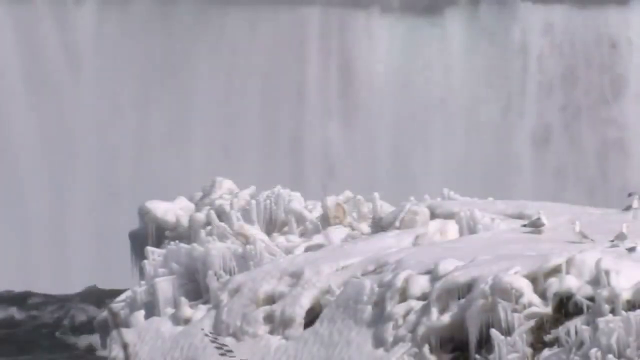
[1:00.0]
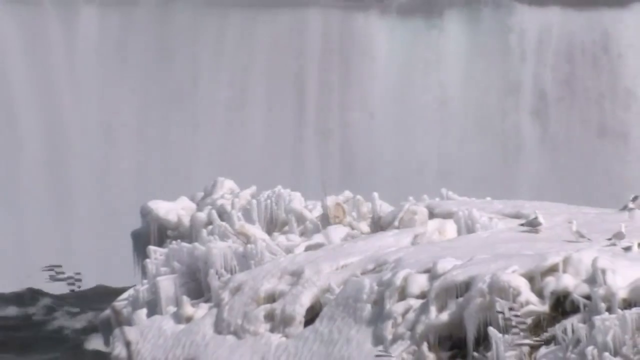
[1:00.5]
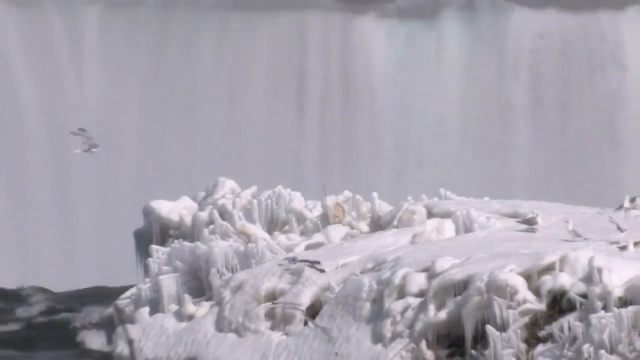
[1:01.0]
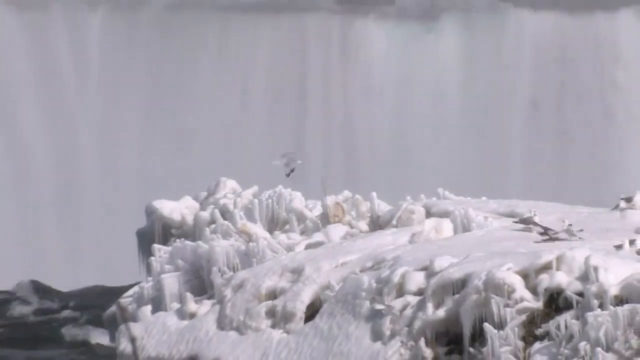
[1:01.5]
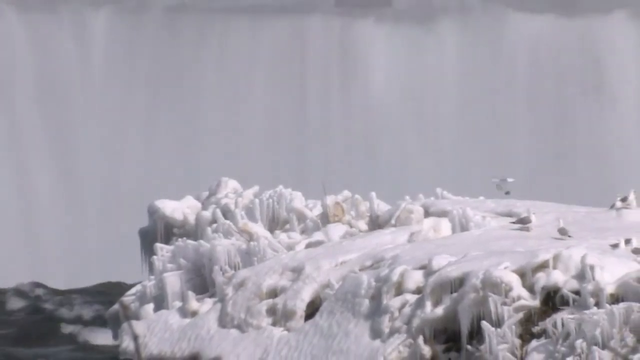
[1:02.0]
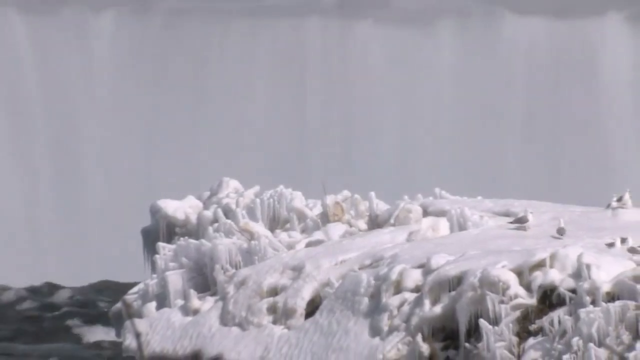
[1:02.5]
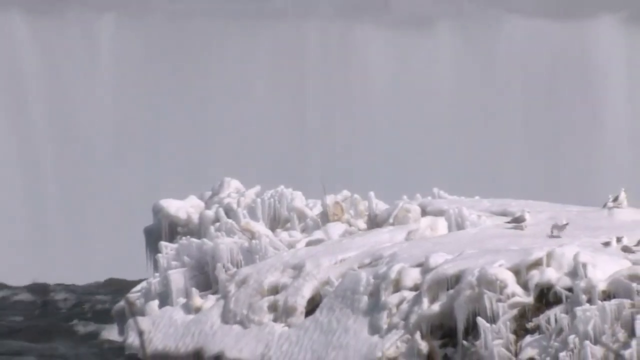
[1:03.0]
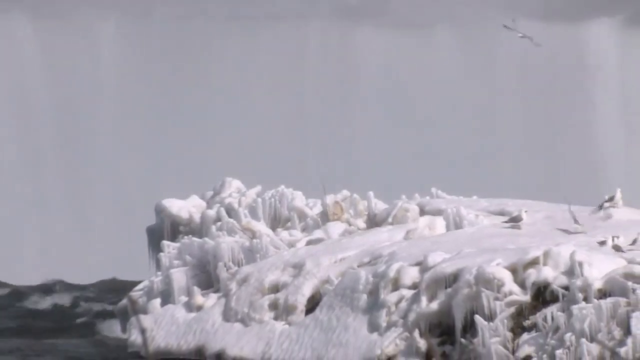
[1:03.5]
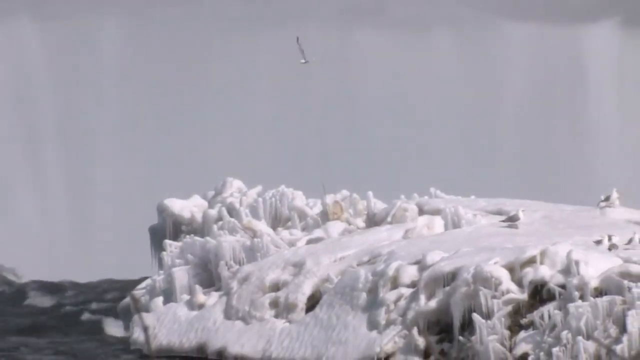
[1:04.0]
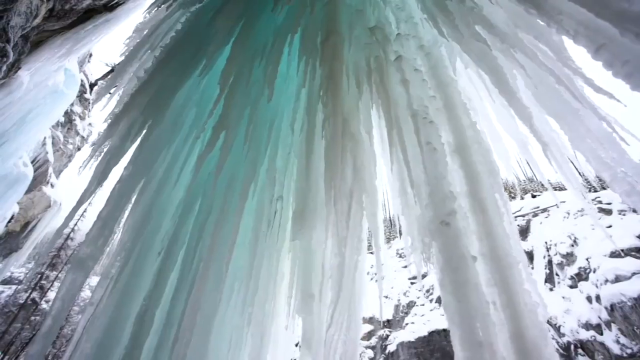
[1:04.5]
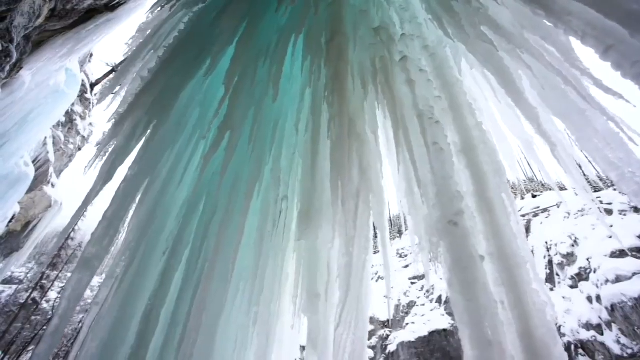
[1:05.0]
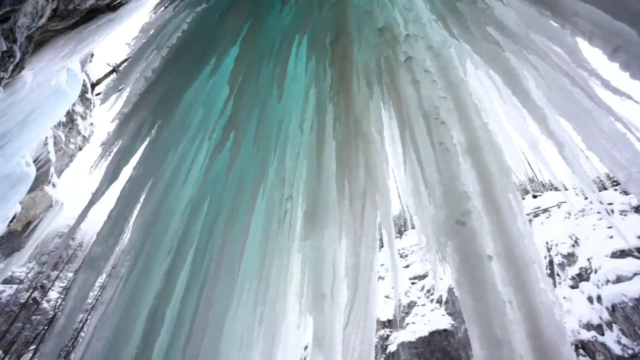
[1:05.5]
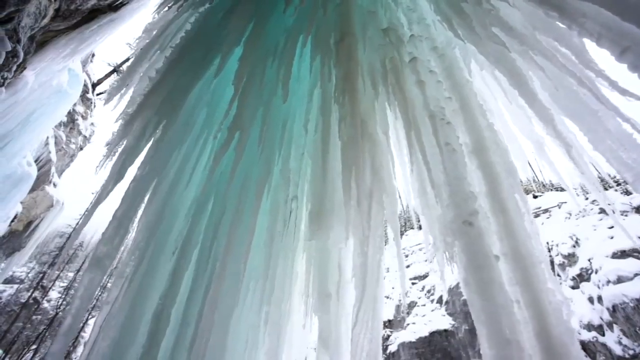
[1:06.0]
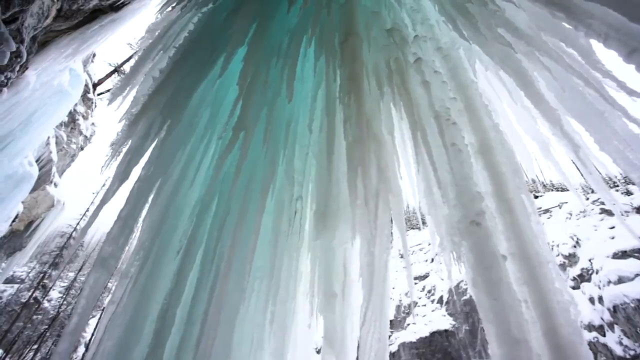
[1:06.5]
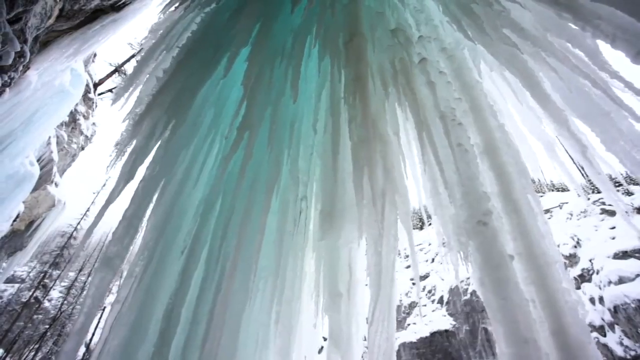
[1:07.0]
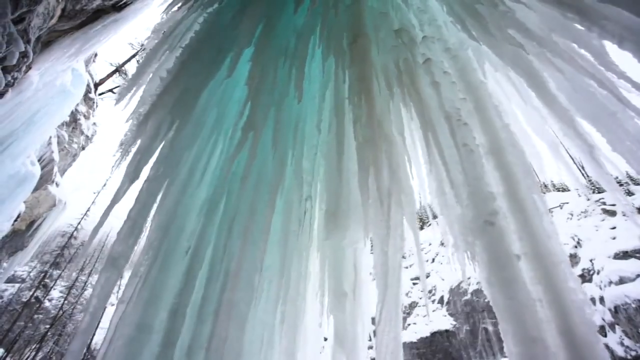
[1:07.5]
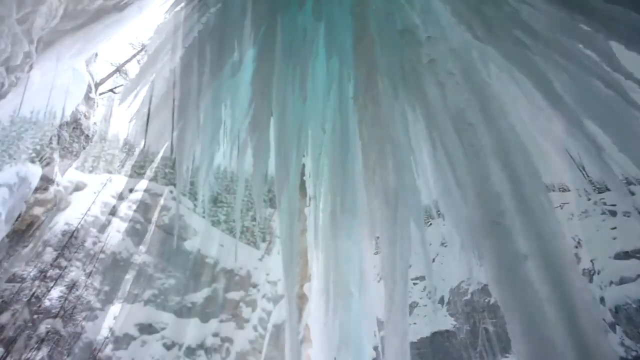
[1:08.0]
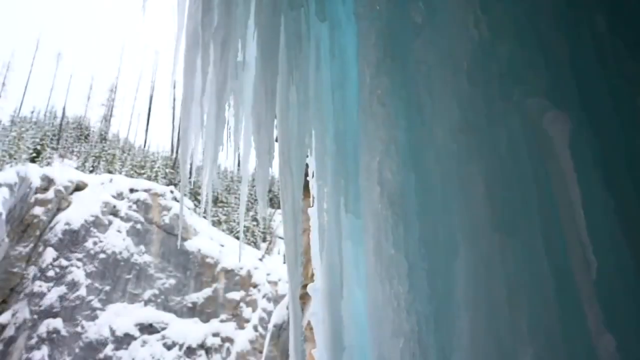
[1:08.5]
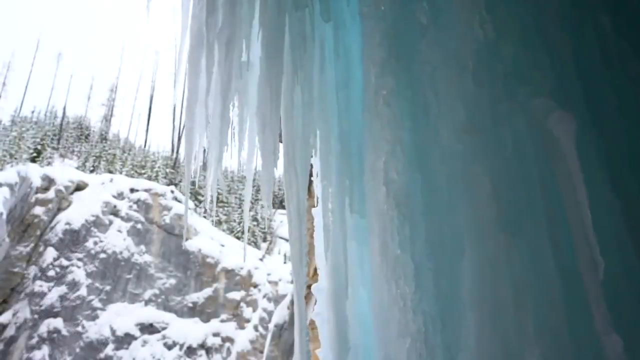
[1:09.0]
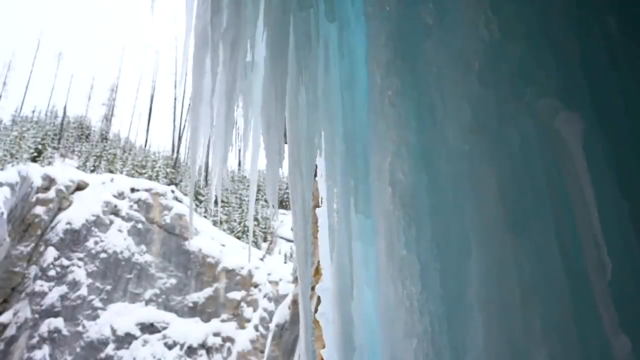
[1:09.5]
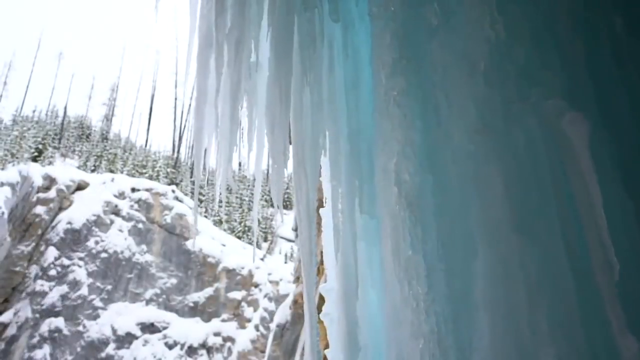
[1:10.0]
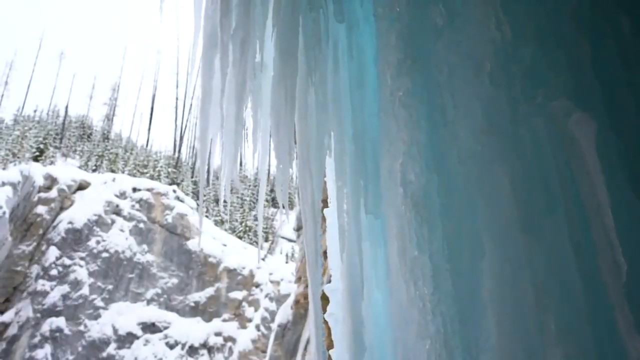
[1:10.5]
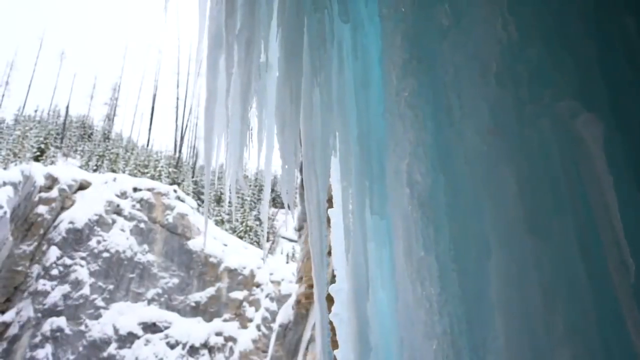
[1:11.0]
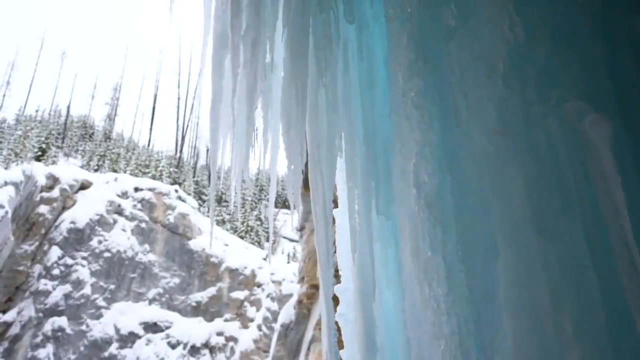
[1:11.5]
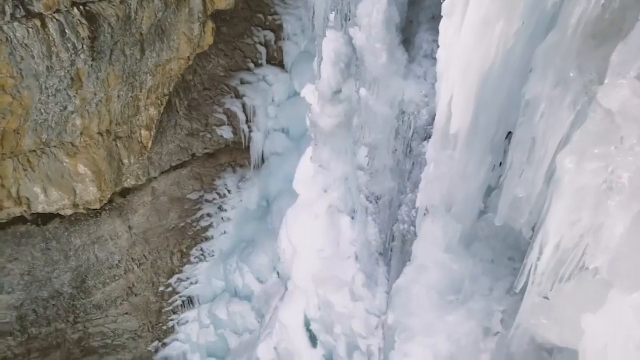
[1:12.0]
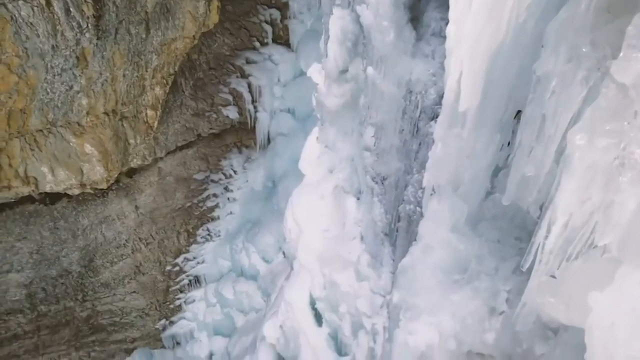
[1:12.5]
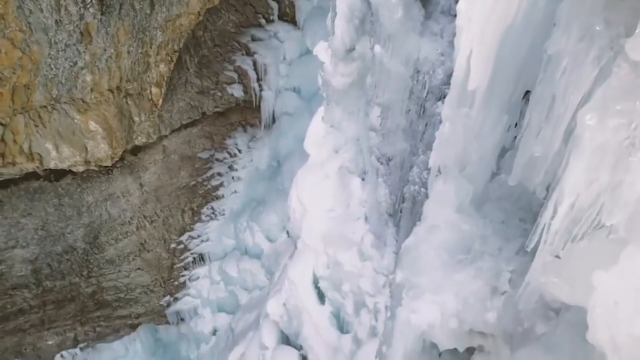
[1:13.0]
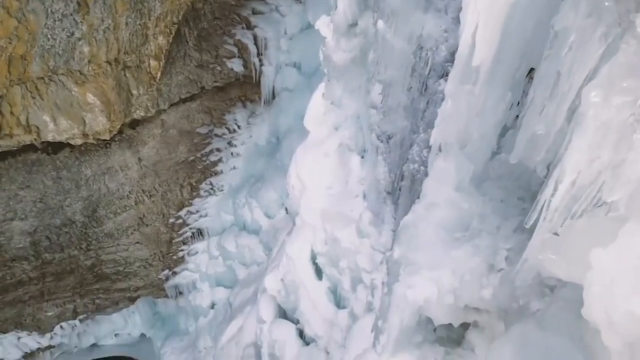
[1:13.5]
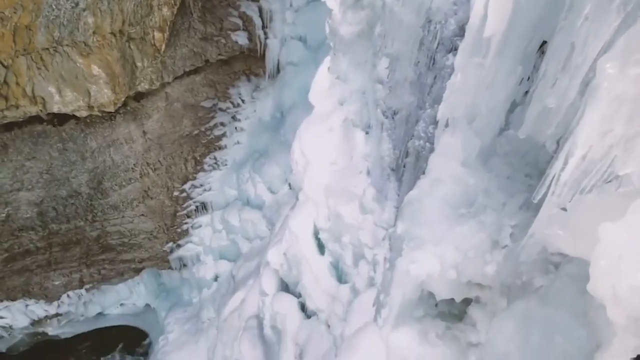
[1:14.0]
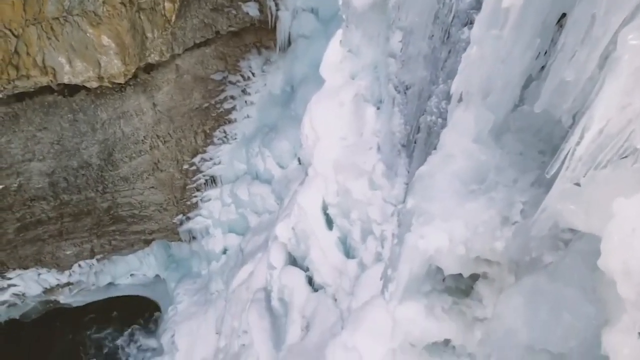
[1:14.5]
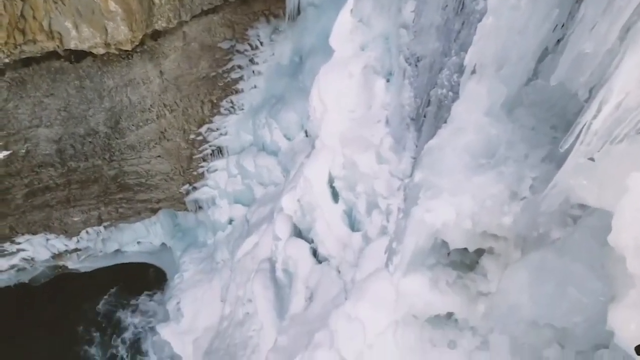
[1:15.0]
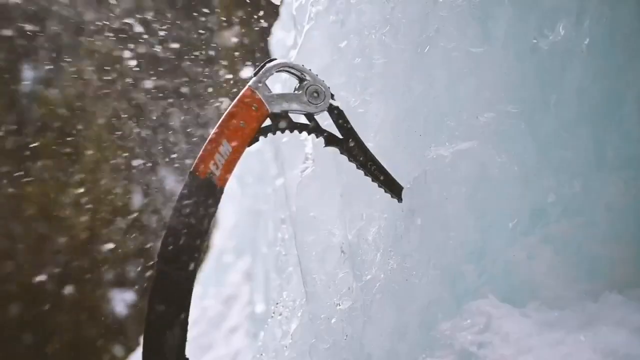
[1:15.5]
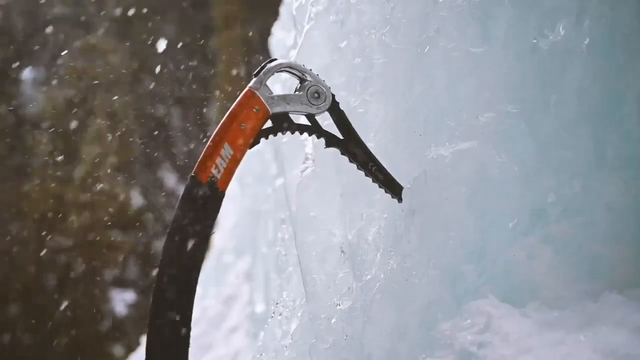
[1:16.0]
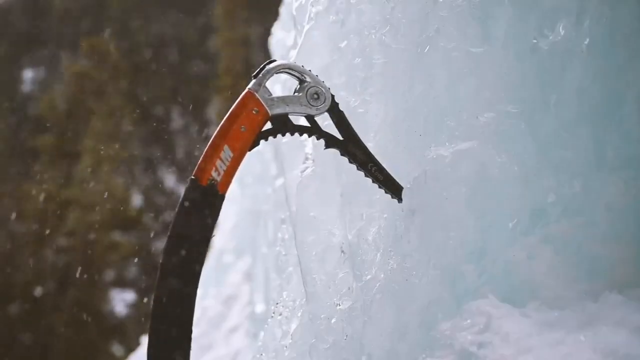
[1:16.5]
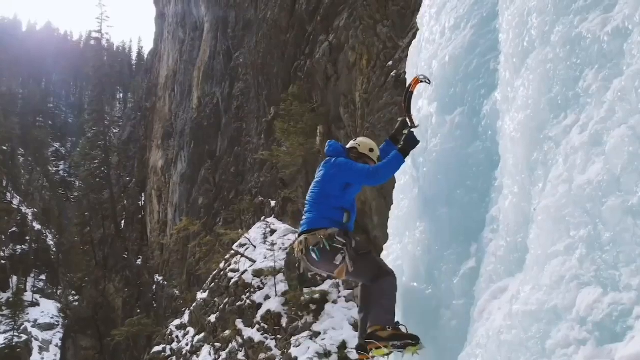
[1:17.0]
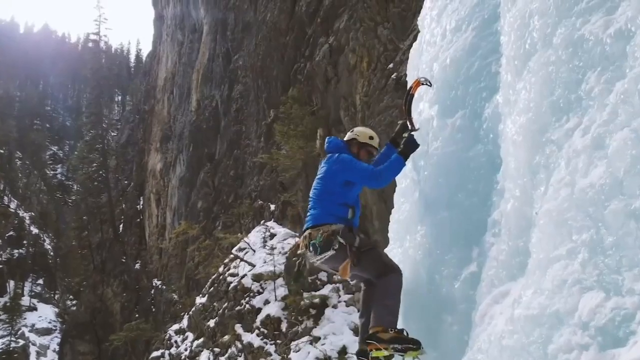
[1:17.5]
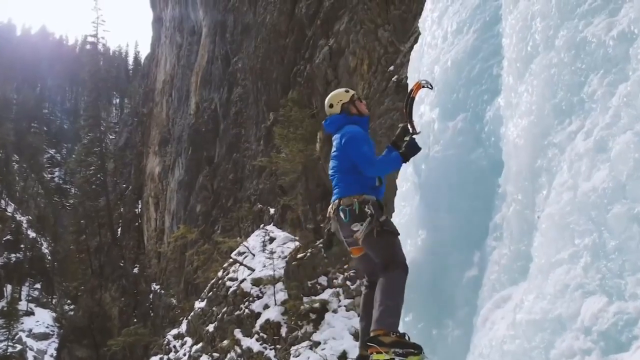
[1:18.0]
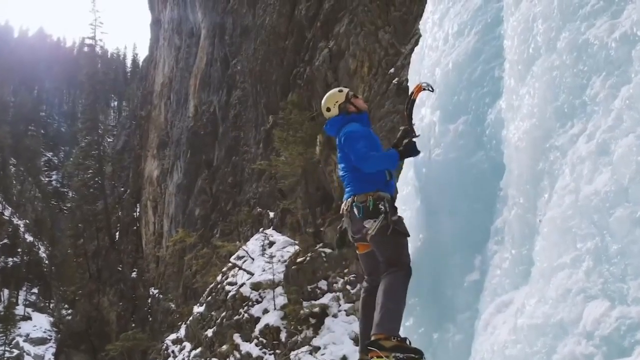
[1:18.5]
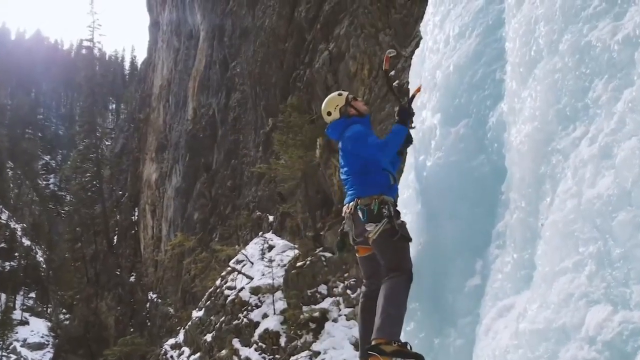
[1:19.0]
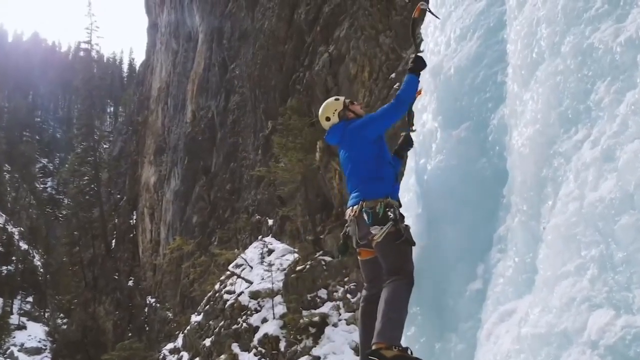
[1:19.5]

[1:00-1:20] A huge waterfall covers a wide area. Before the waterfall there is a piece of land covered in ice, giving it a very white colour. The next shot is from below, showing falling ice created by the falling water from the waterfall. This ice has formed pointy objects that point downwards, and blue light forms as the light shines through the ice. The camera views from outside this ice, showing plants in the distance. The view then changes to a top view of a ball of ice clinging to the rocks with a pool next to it; the ice has formed structures that look like pillars. The next shot shows what looks like a saw or chain; as the camera moves away, it appears to be a tool gripping the ice, used by a man climbing up the ice who wears a blue jersey, straps and a helmet.